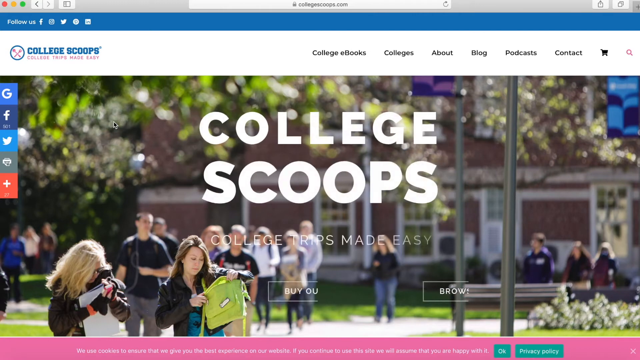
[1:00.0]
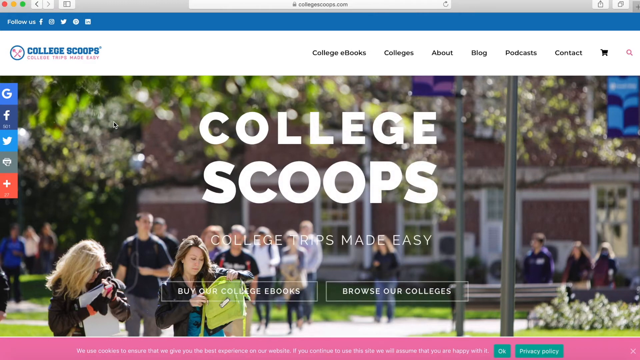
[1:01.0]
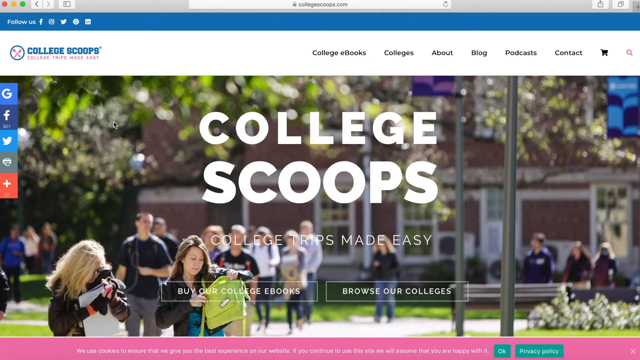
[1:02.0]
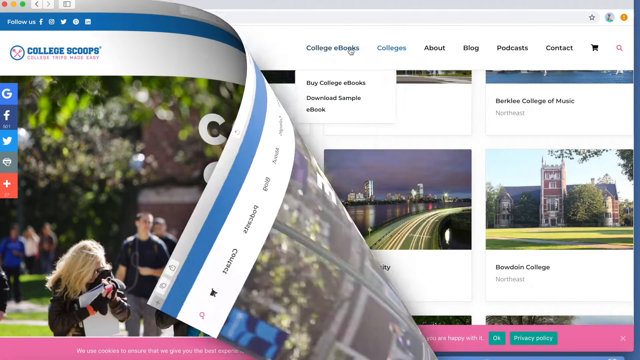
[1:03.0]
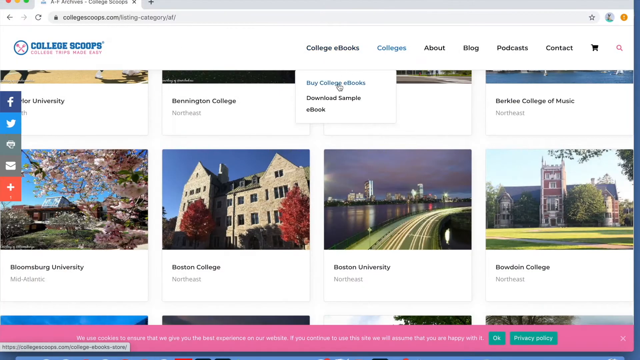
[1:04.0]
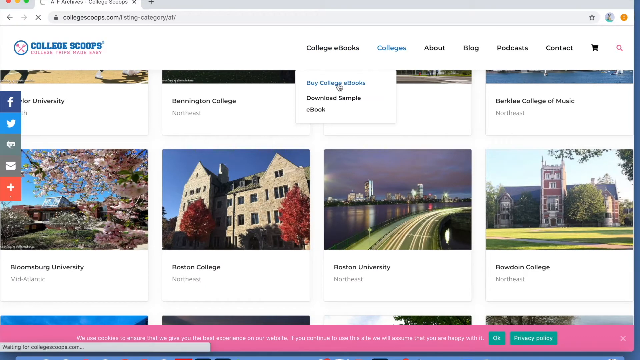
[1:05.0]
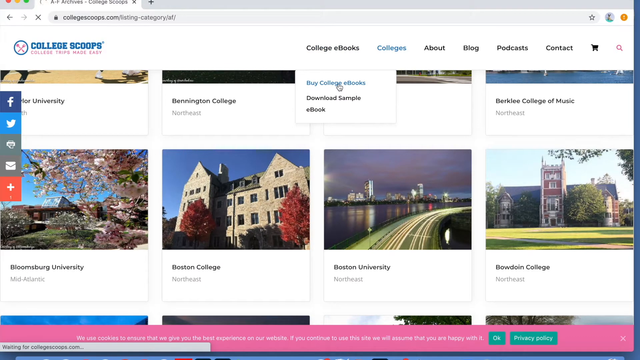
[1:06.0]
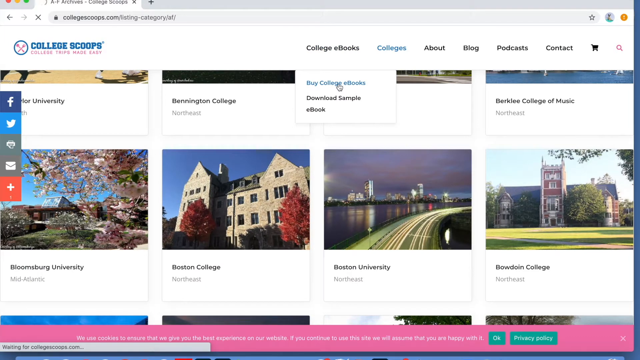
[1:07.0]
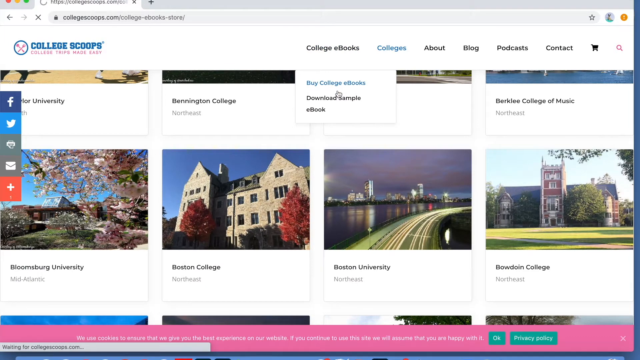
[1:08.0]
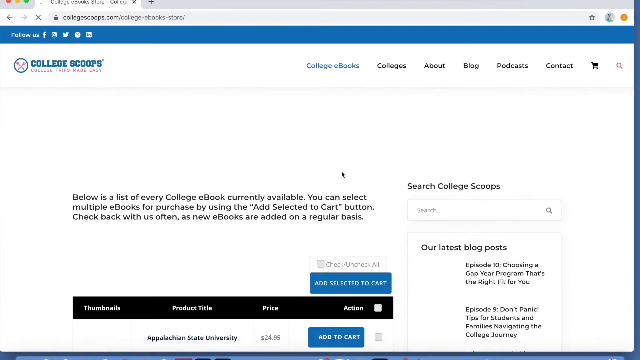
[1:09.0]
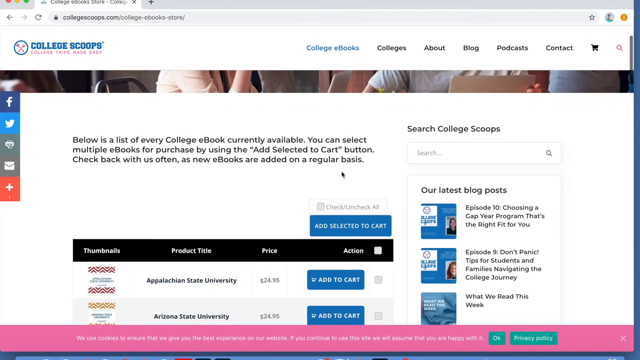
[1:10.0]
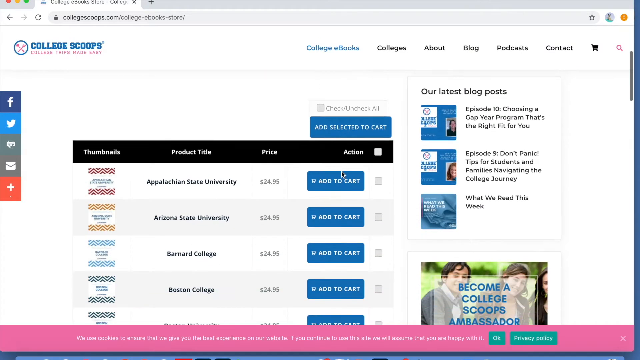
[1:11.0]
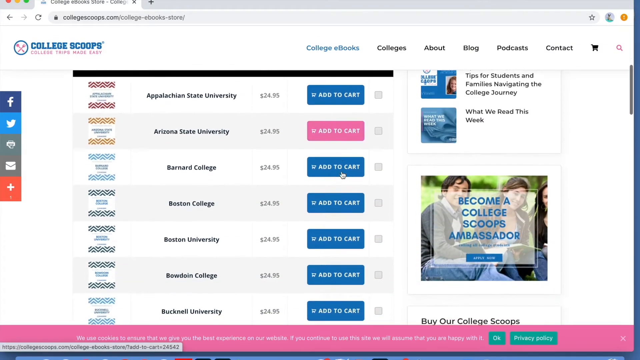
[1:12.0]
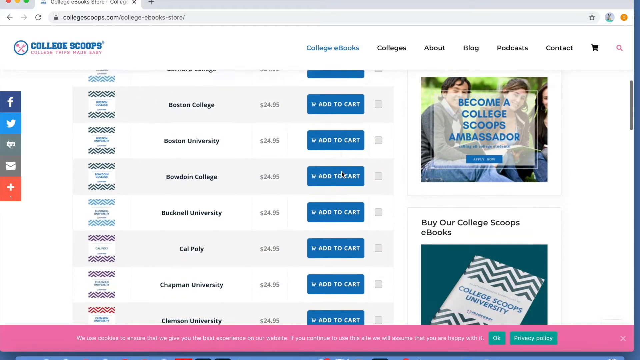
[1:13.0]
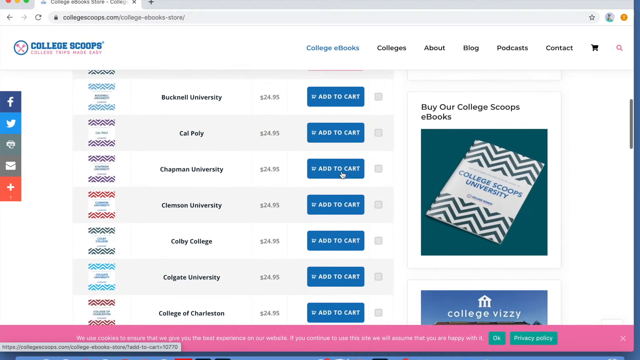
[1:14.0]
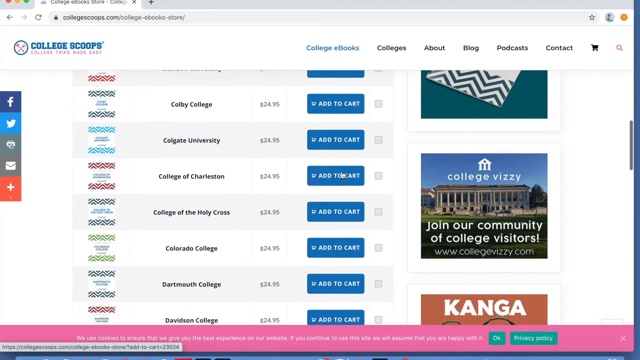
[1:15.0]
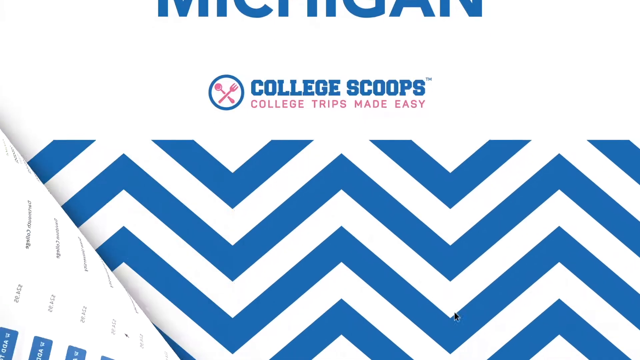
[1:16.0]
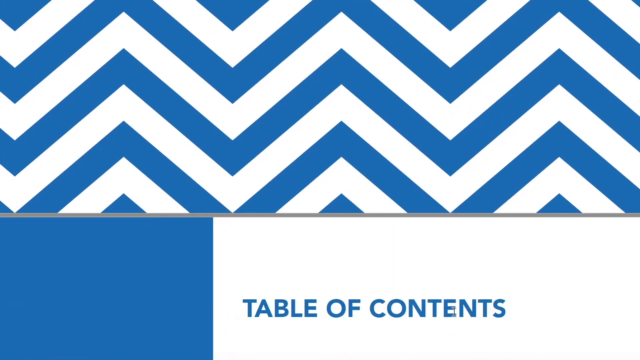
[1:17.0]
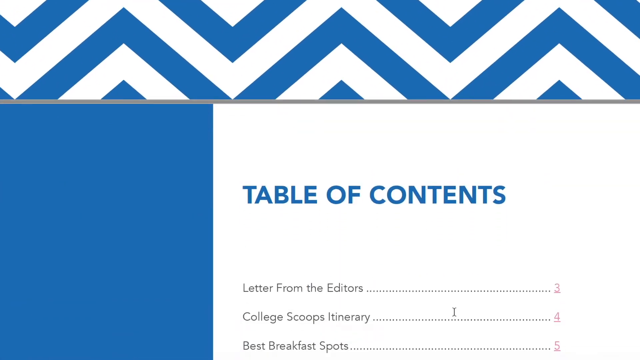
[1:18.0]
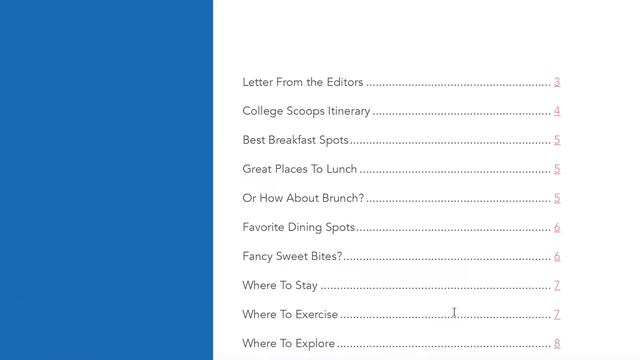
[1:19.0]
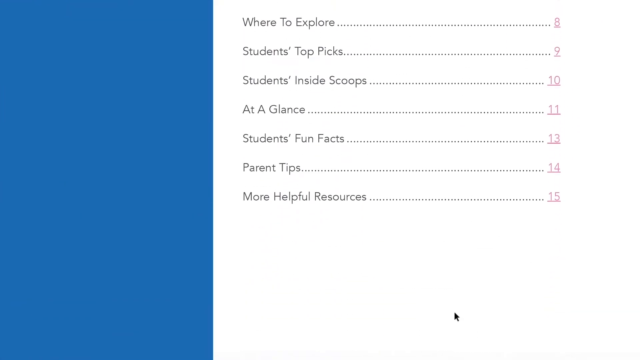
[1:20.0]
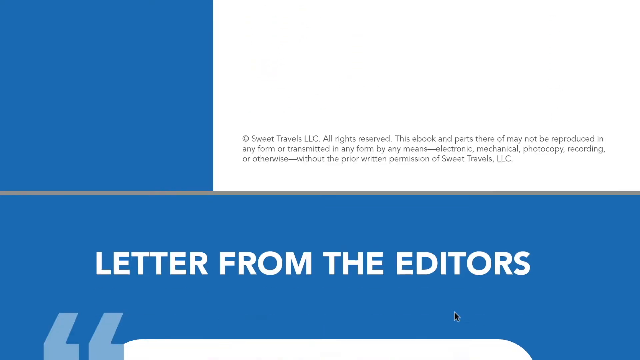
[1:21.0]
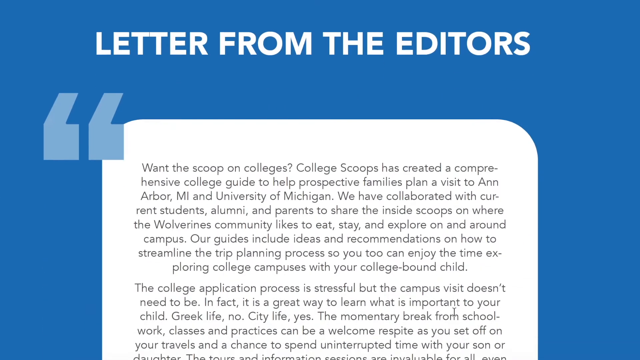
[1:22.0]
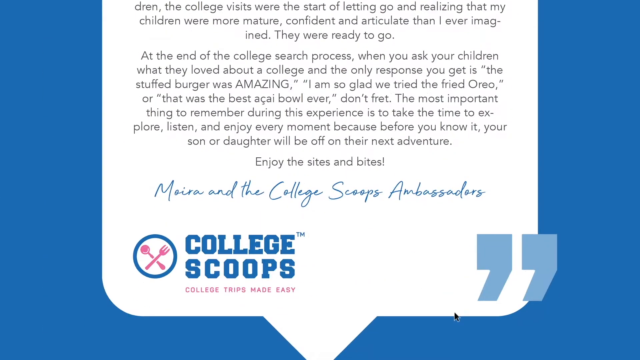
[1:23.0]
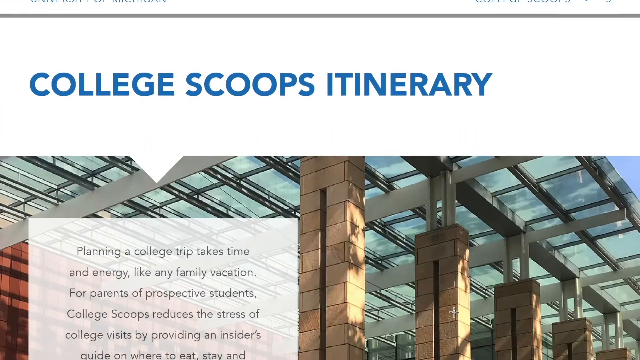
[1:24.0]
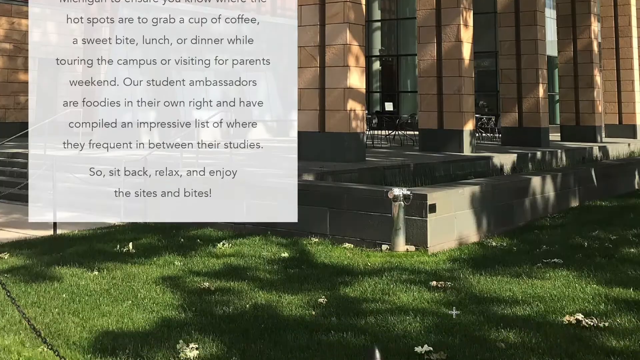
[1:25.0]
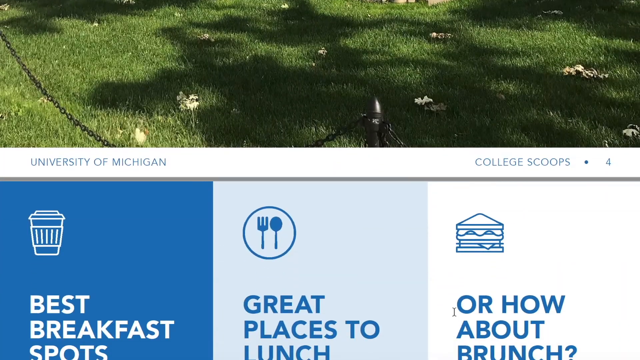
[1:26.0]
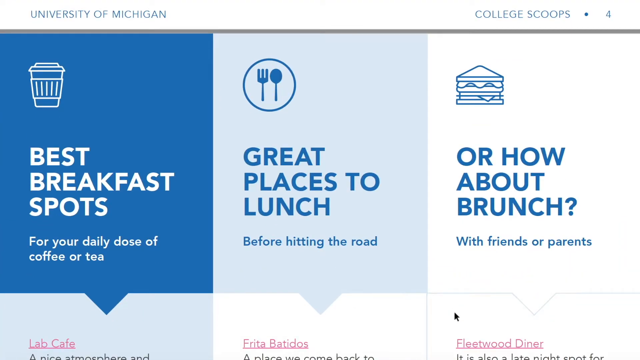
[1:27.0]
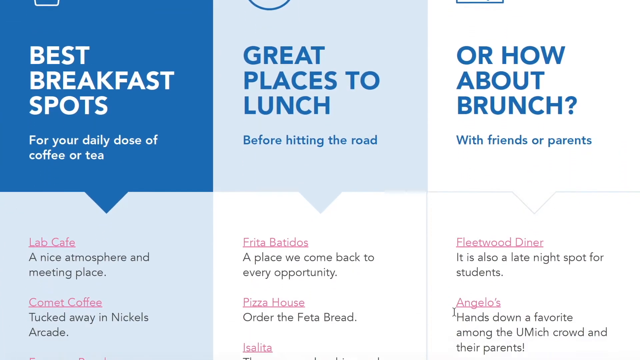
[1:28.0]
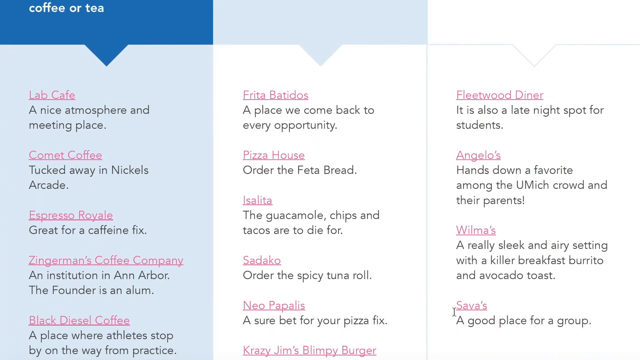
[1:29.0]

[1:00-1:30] The College Scoops website is shown, apparently being introduced along with how to navigate it. The homepage has "college scoops" in big bold white letters in the middle, with "college trips make easy" right below it. Two buttons are at the bottom: the left one reads something like "buy our club college ebooks" and the bottom right one reads "browse our colleges." A navigation bar at the top reads "college ebooks, colleges about blog, podcasts, and contact," along with cart and search icons. The view moves to a different page with a sort of page-turning animation. The colleges tab is opened, then buy college ebooks, and the page is scrolled down, showing a few different available books such as Colby College. Scrolling further reaches what appears to be one of the actual ebooks.